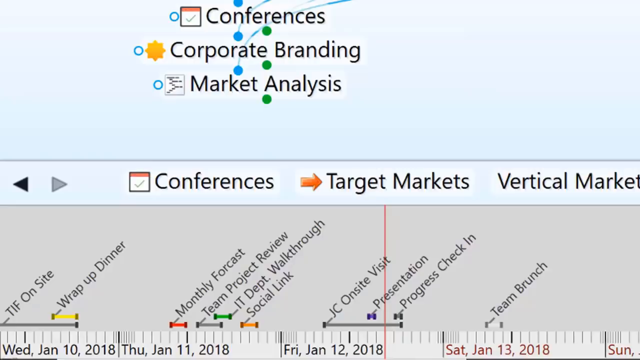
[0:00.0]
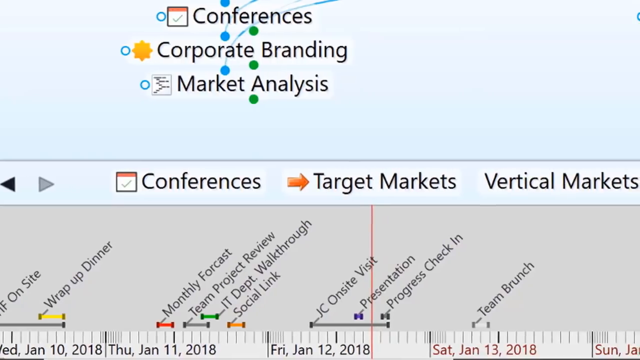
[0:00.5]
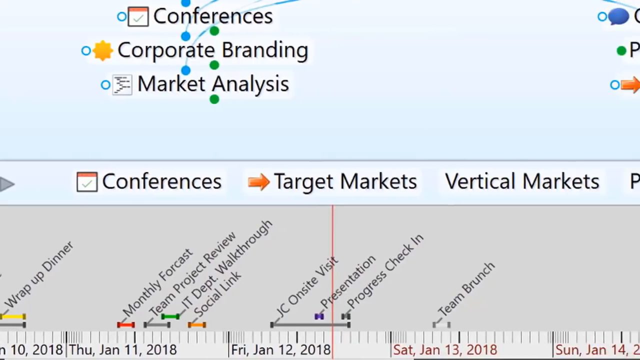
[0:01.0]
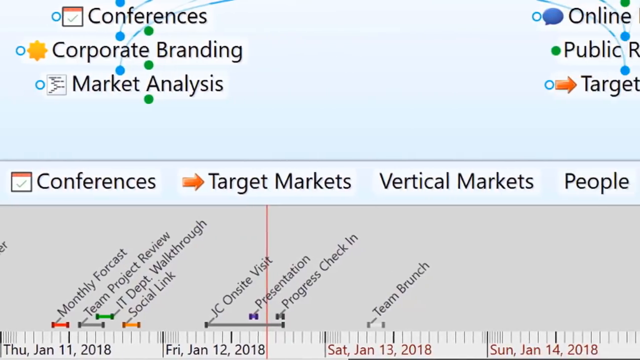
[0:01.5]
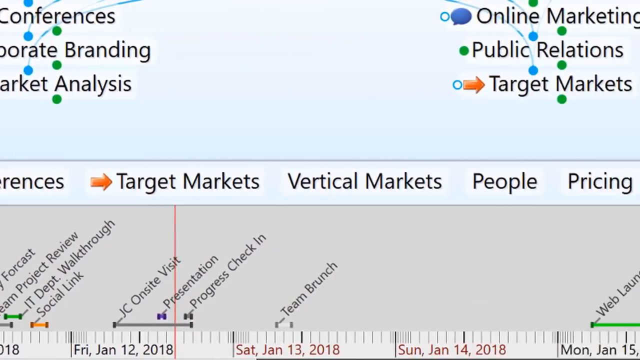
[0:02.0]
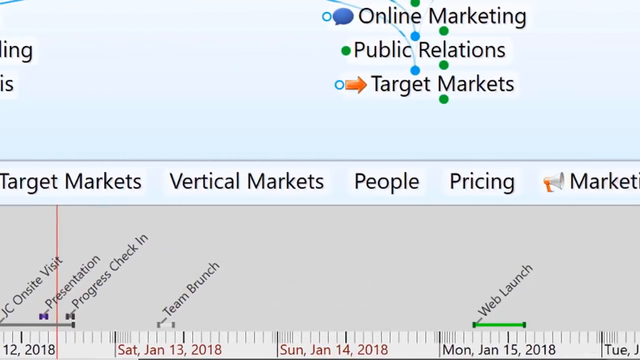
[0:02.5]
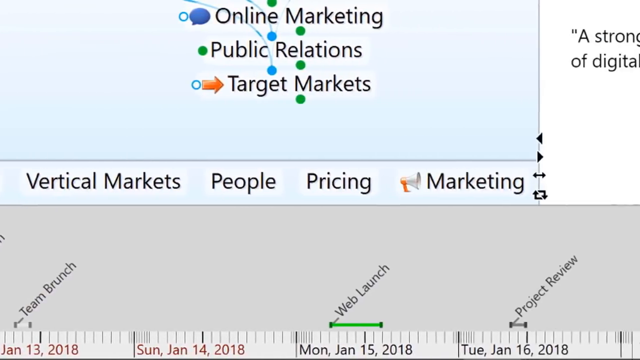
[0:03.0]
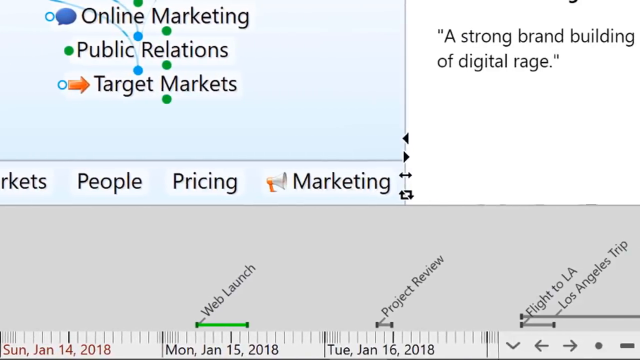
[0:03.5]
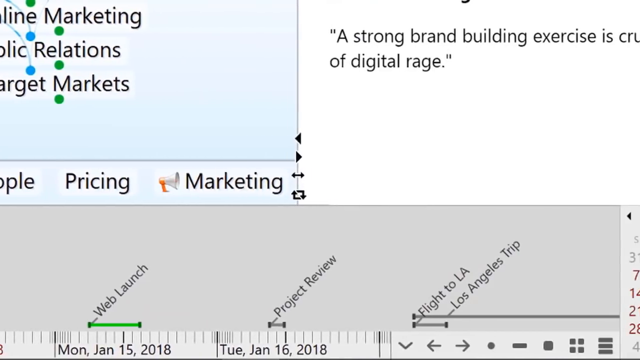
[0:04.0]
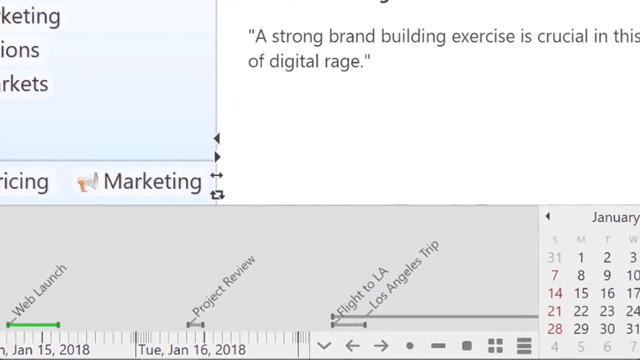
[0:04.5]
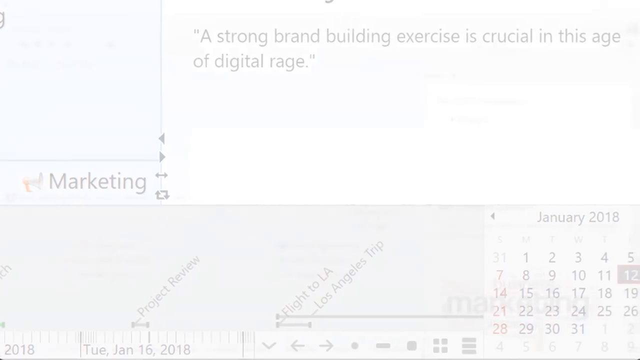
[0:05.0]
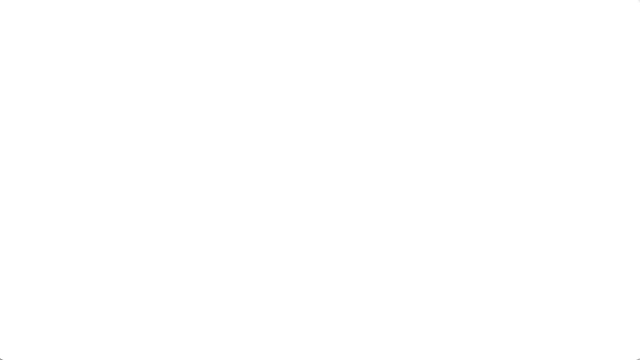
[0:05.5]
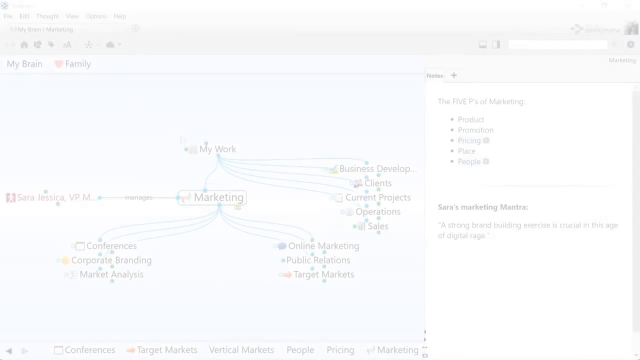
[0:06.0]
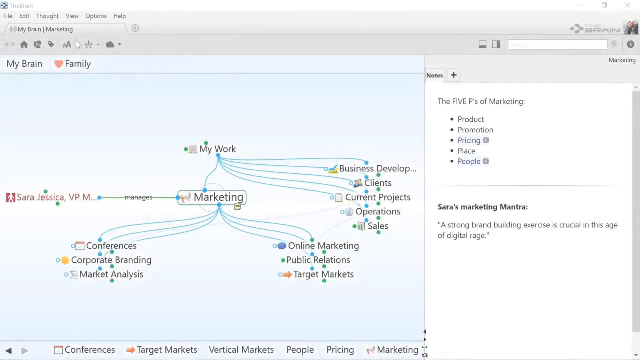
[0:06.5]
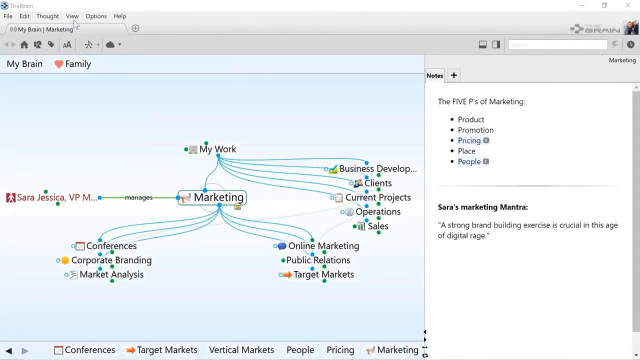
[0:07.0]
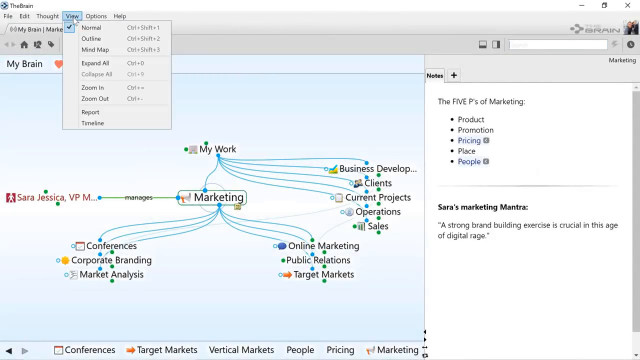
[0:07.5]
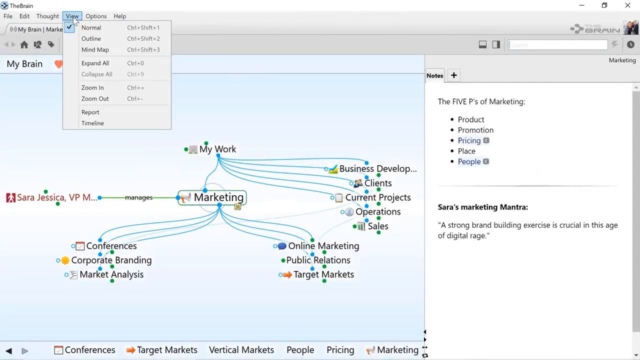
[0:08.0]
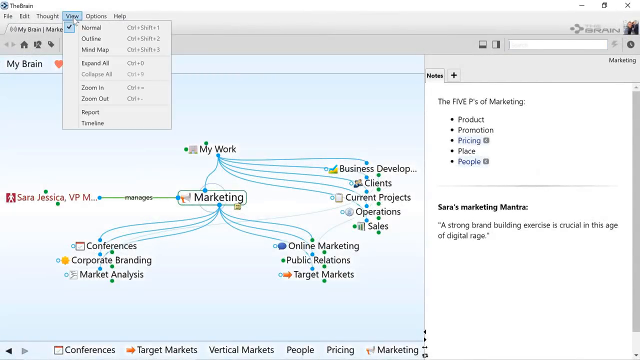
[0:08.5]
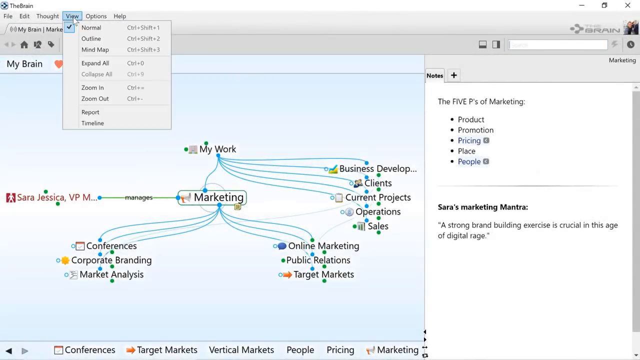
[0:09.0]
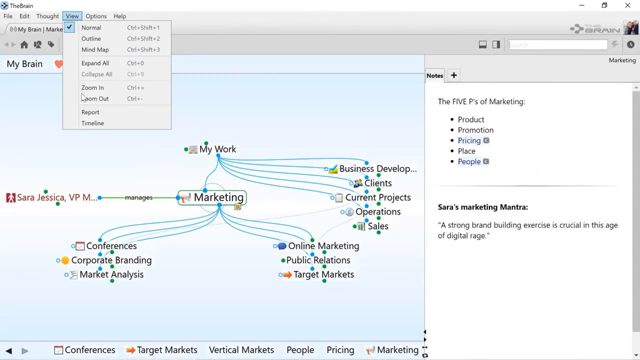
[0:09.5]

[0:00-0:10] The screen shows a desktop application called Brain, moving from left to right as it displays data. Items include "my work," "marketing," and "Sarah Jessica," with a relationship linking Jessica to marketing. Lines flow from "my work," ostensibly the person's application, to items such as business development, clients, current projects, operations, and sales, forming a relational diagram. Text lists "the five P's of marketing, product, promotion, pricing, place, people" and "Sarah's marketing mantra, a strong brand building exercise is crucial." A closer, tighter view then shows conferences, corporate branding, market analysis, target market, and vertical markets.